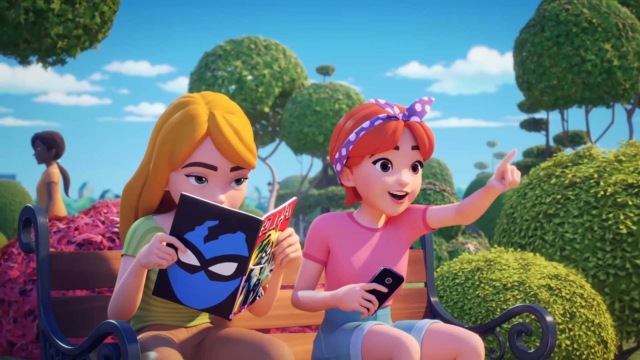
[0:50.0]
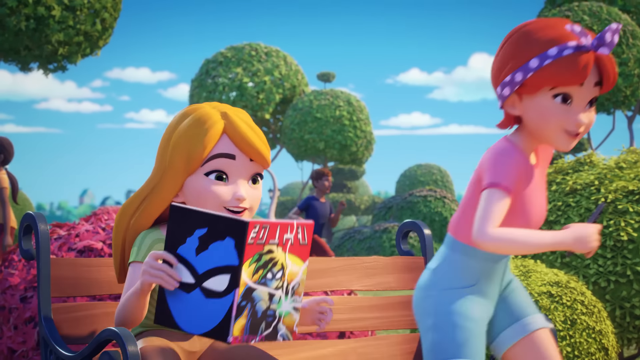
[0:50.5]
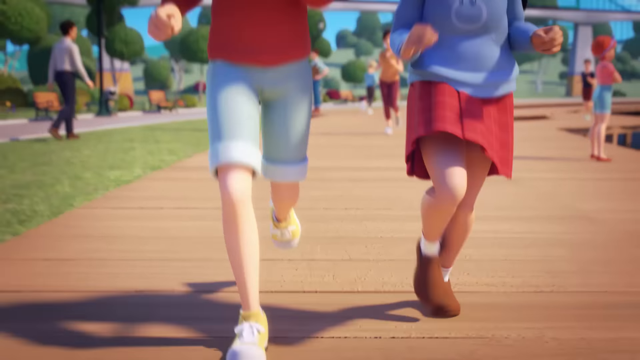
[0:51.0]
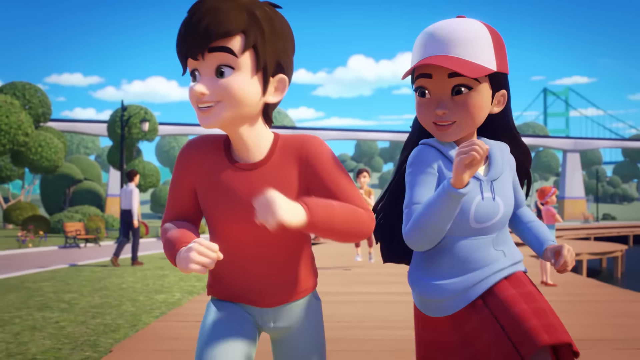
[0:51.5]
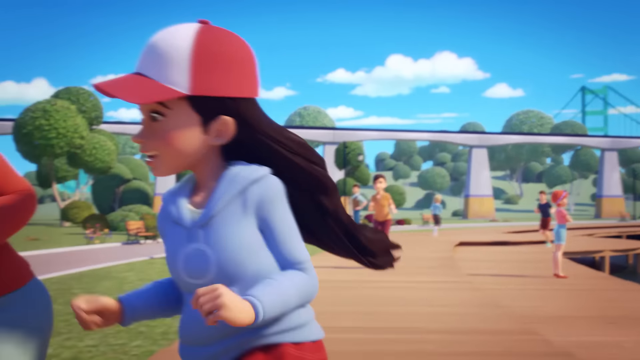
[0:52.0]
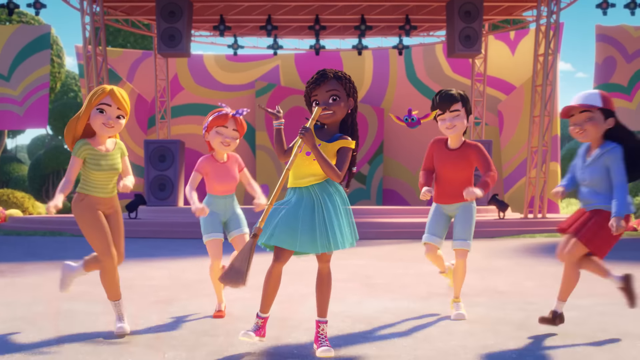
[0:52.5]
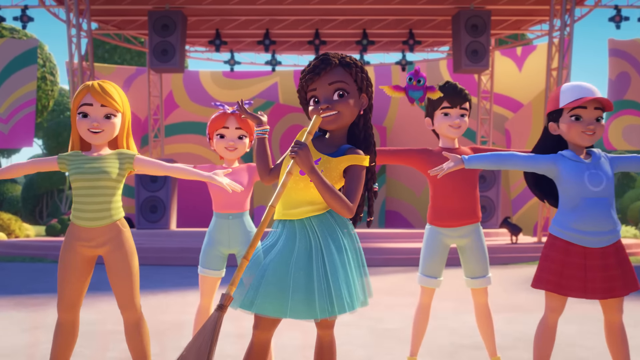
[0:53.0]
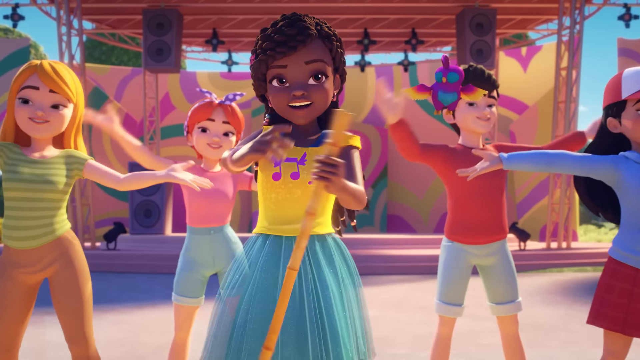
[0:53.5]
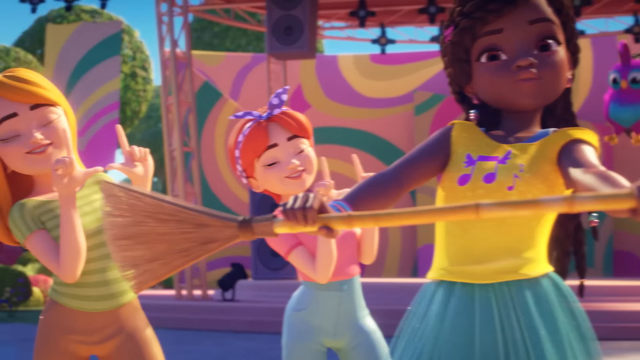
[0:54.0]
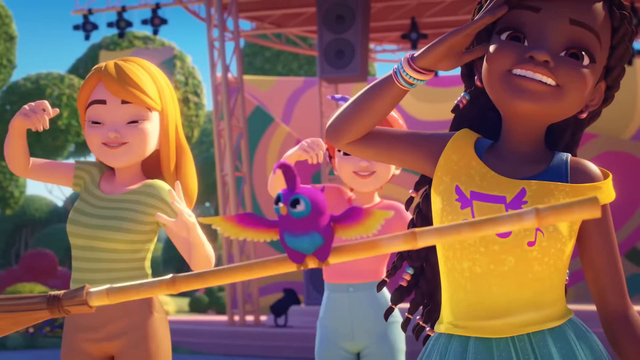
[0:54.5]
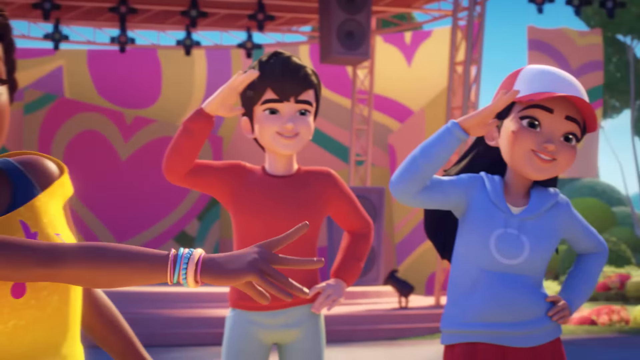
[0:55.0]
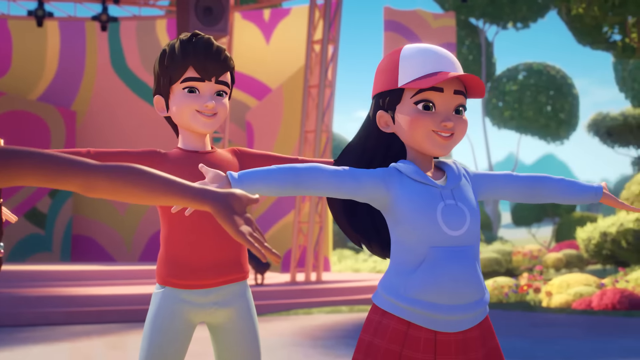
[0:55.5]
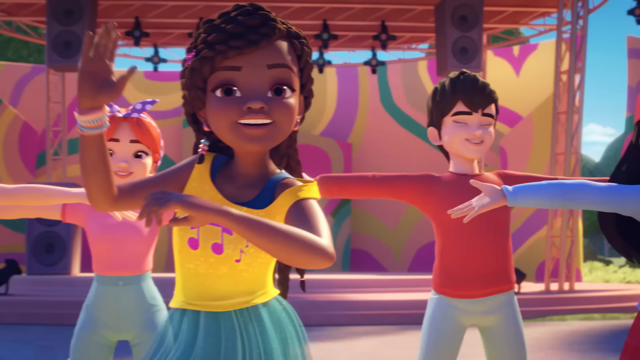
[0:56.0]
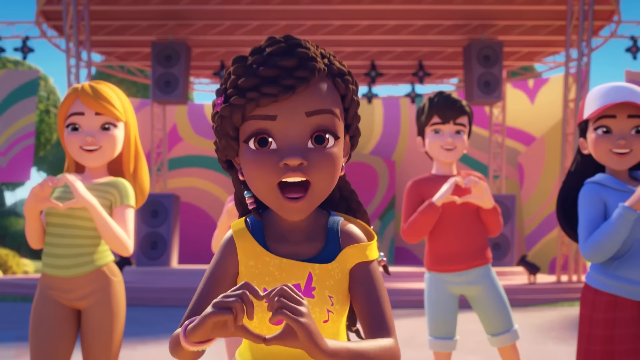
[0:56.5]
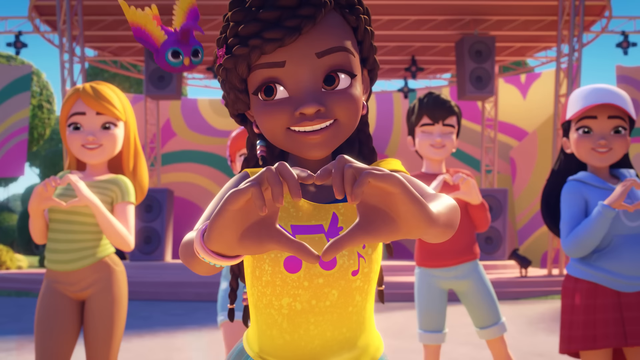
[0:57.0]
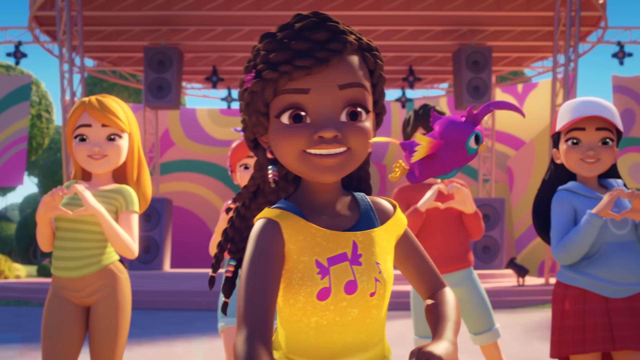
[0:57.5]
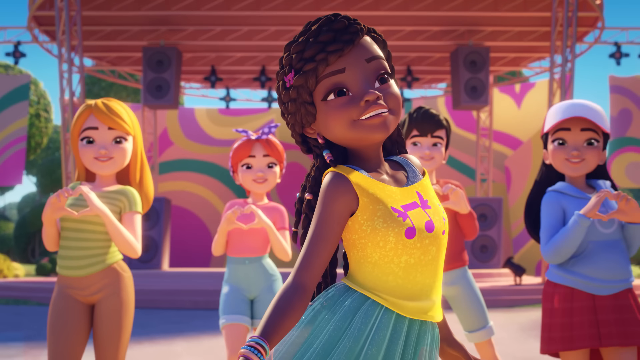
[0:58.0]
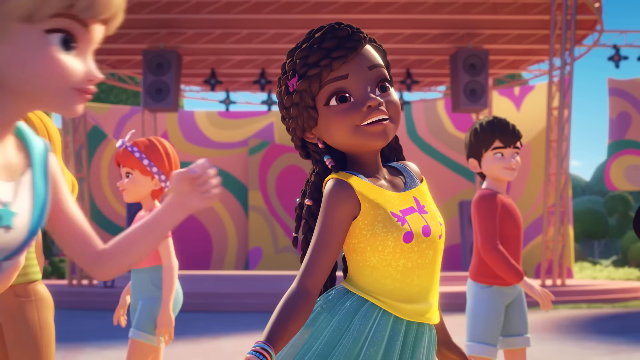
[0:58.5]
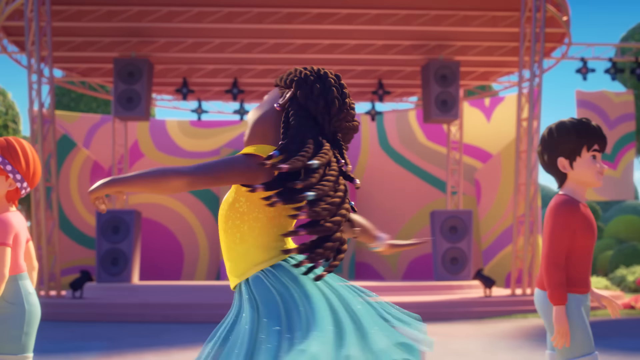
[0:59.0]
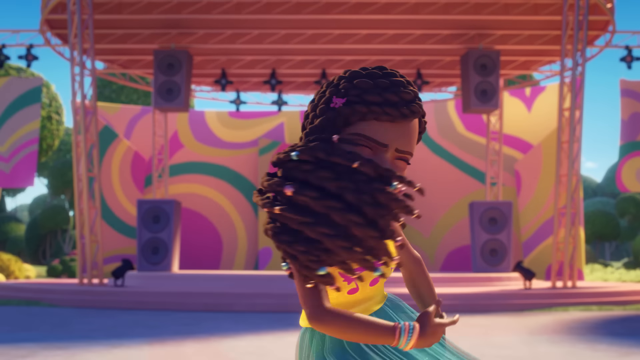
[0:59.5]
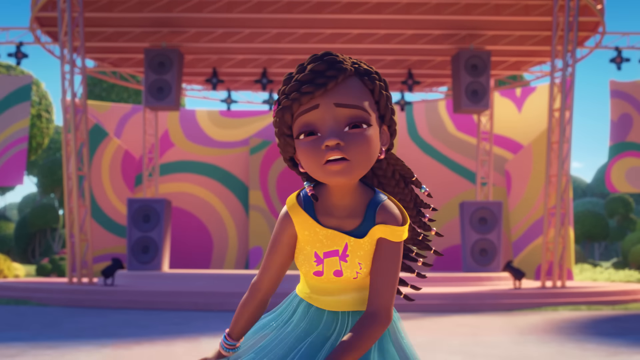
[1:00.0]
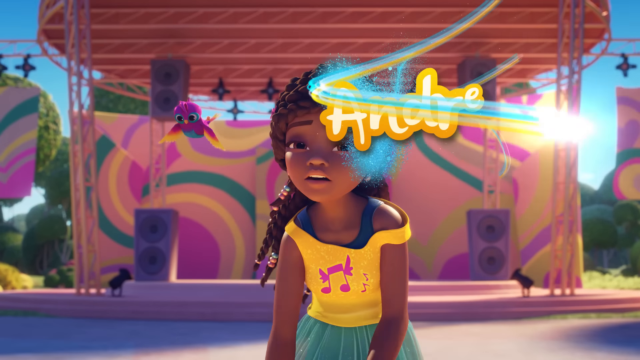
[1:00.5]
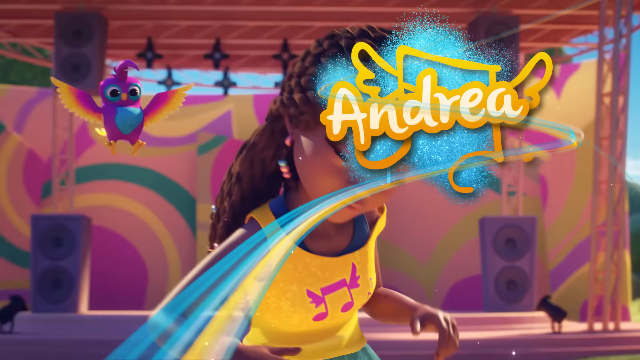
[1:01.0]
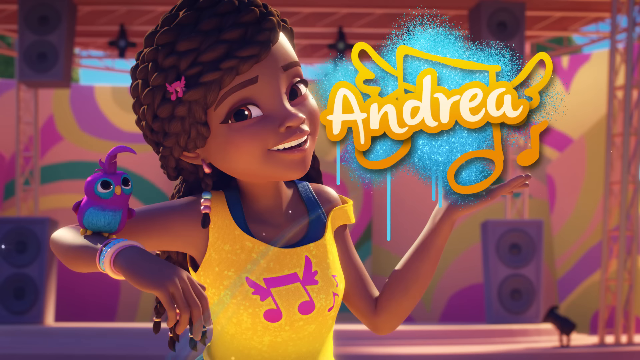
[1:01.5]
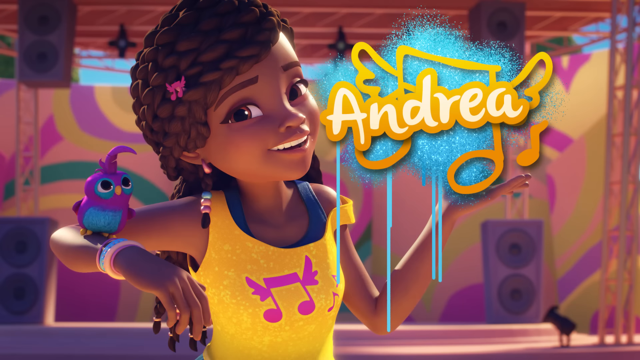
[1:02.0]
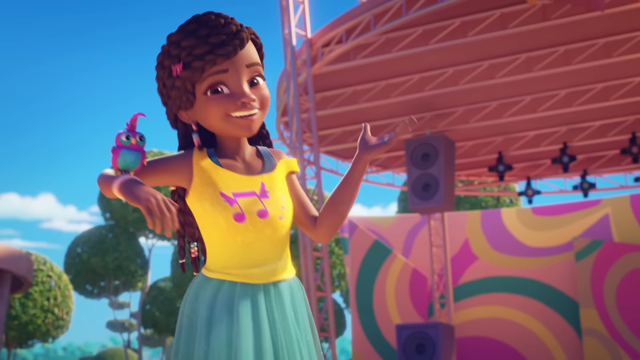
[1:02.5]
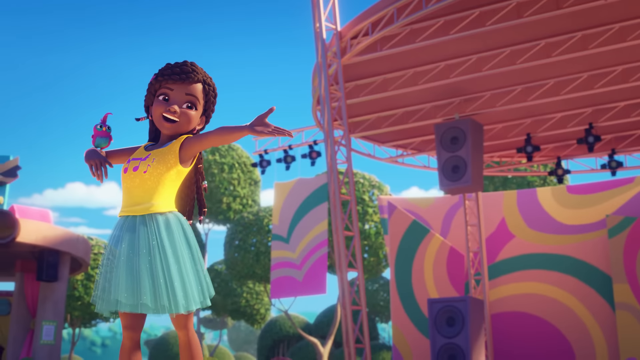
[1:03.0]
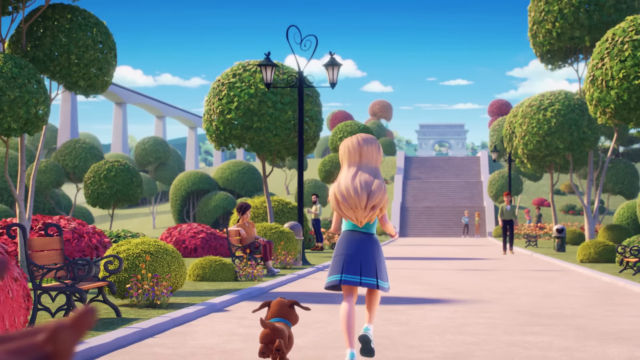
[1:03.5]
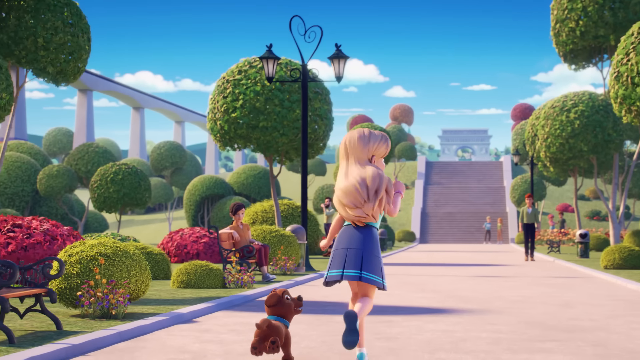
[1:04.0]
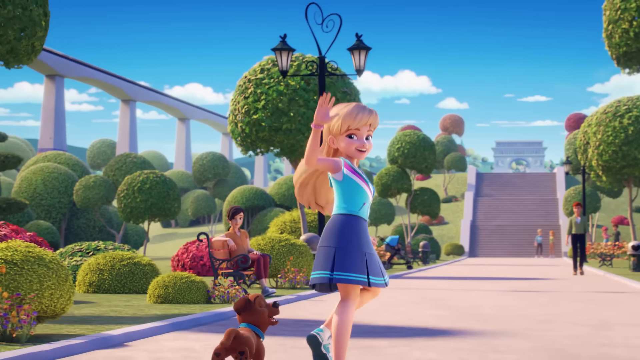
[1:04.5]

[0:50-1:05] Another friend is introduced, holding a broom. Other townspeople join her in song and dance. Stephanie comes by, bumps into her without apologizing, and runs off. This friend is shown to be Andrea, and she has a little purple bird with her. Stephanie eventually turns around and waves hello, and Andrea waves back.